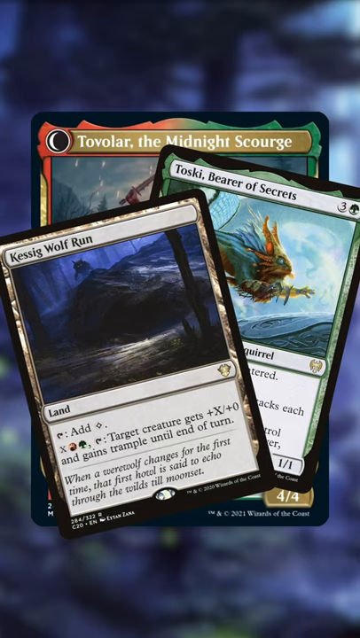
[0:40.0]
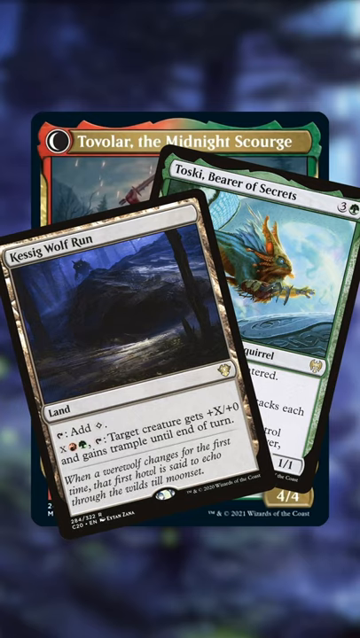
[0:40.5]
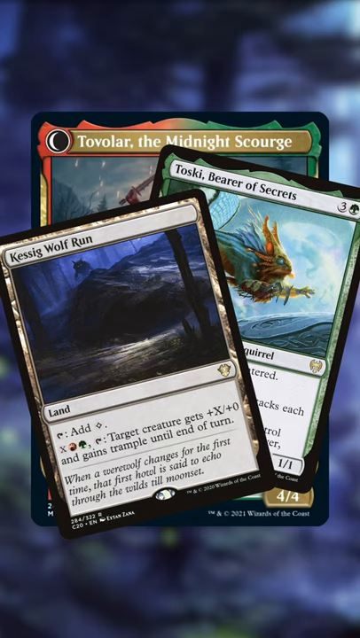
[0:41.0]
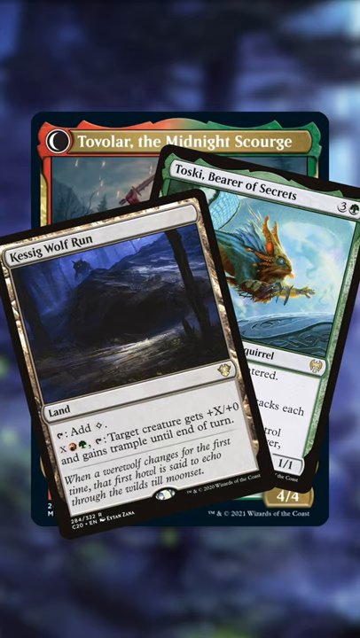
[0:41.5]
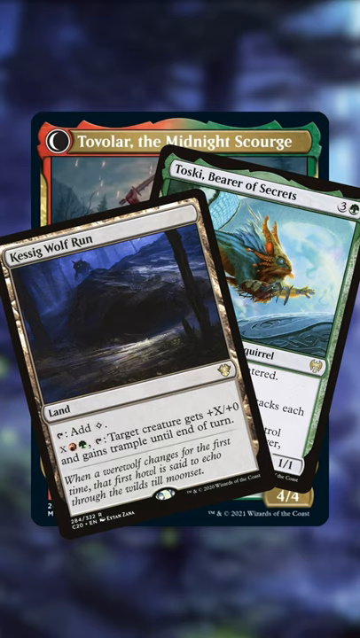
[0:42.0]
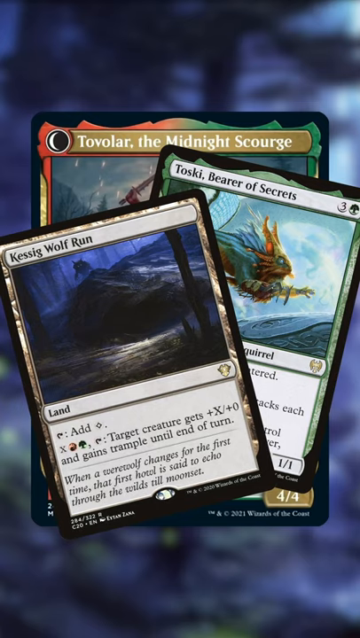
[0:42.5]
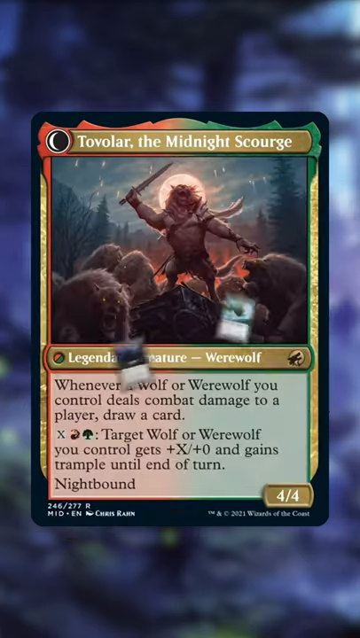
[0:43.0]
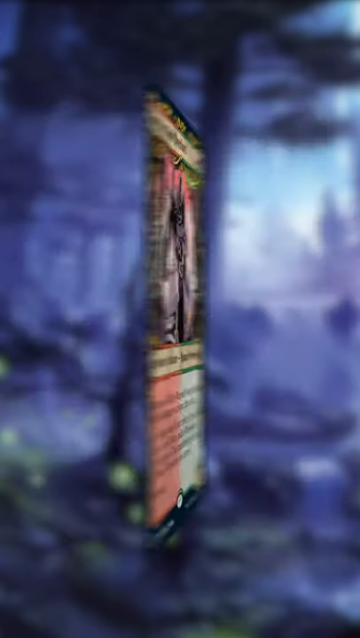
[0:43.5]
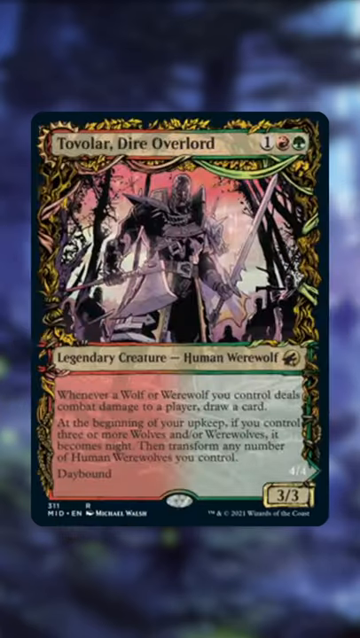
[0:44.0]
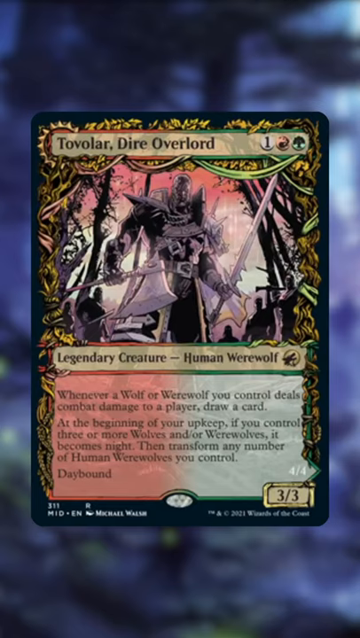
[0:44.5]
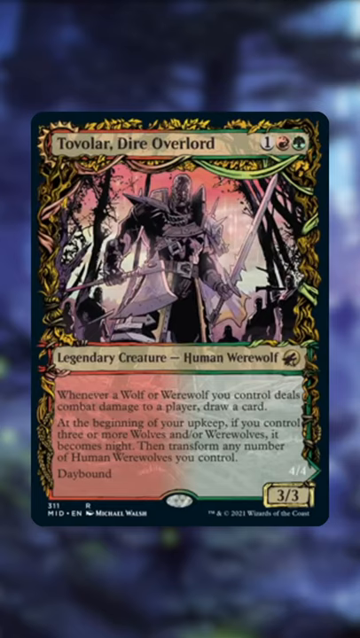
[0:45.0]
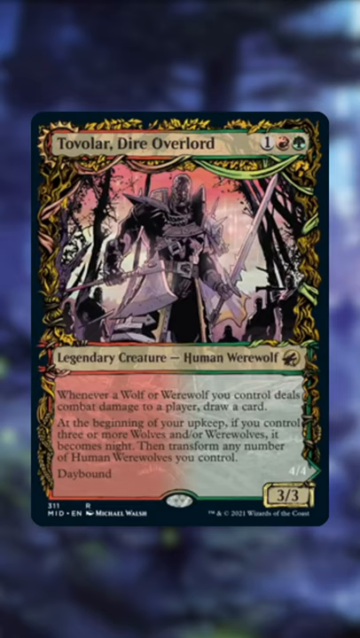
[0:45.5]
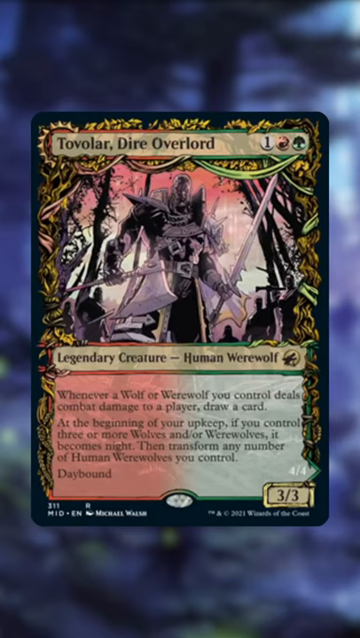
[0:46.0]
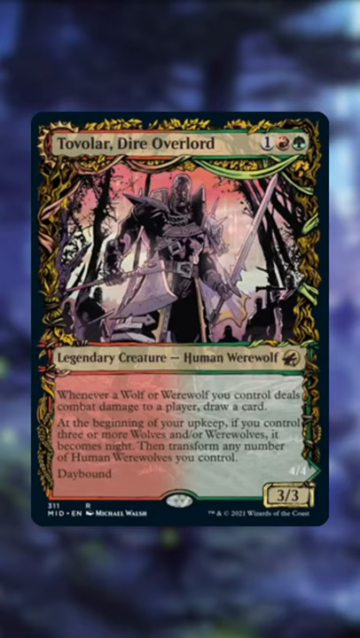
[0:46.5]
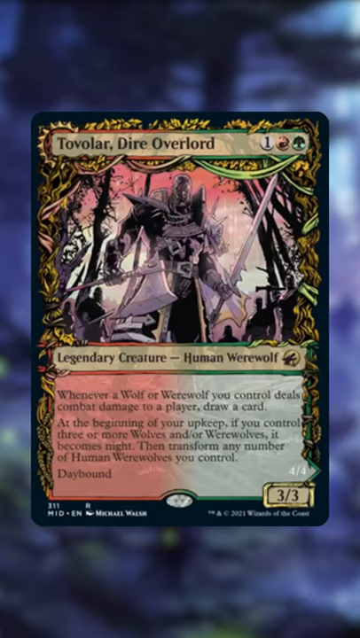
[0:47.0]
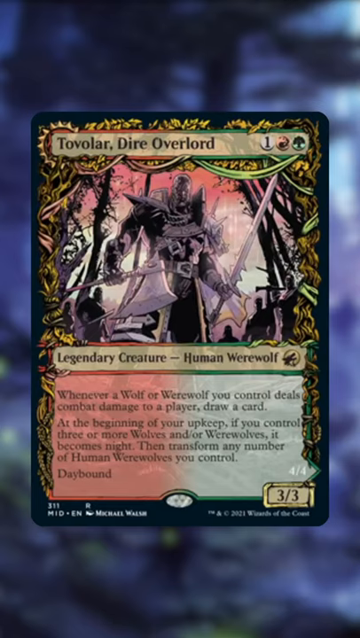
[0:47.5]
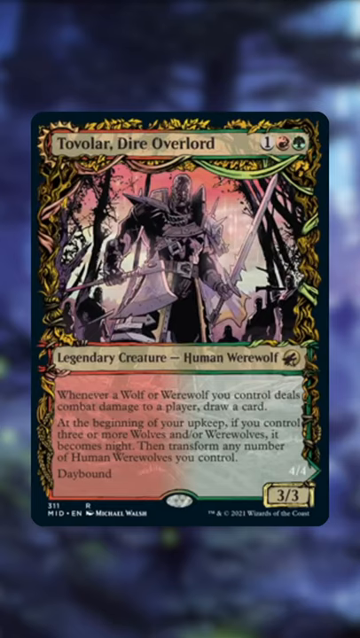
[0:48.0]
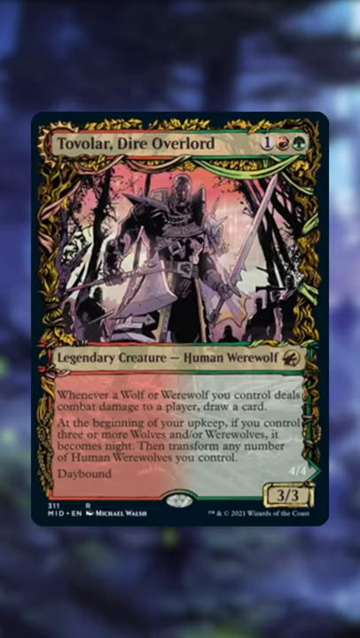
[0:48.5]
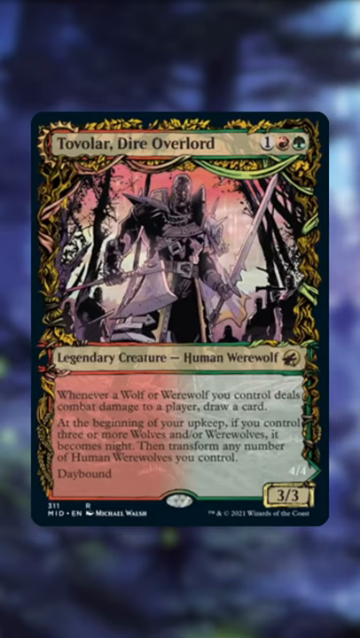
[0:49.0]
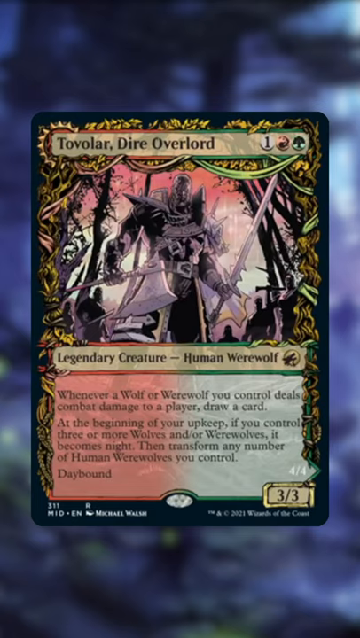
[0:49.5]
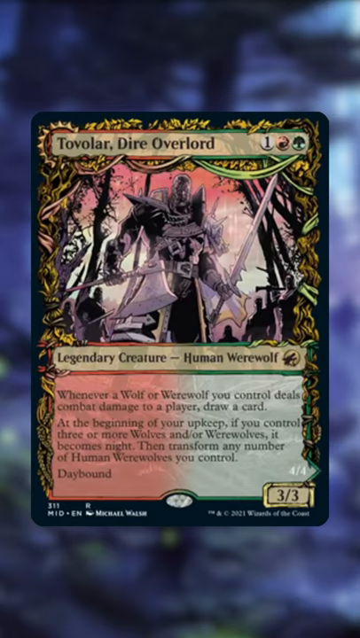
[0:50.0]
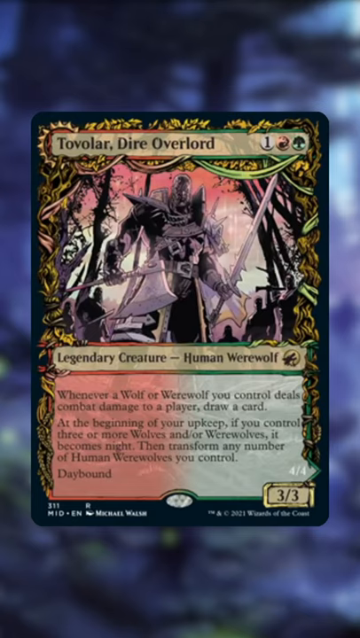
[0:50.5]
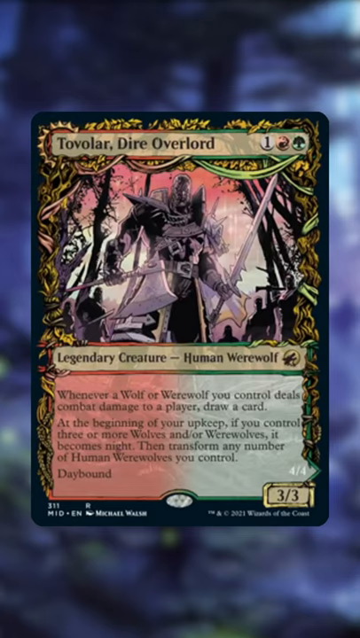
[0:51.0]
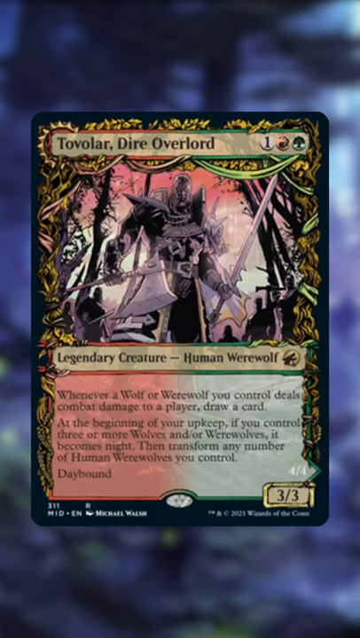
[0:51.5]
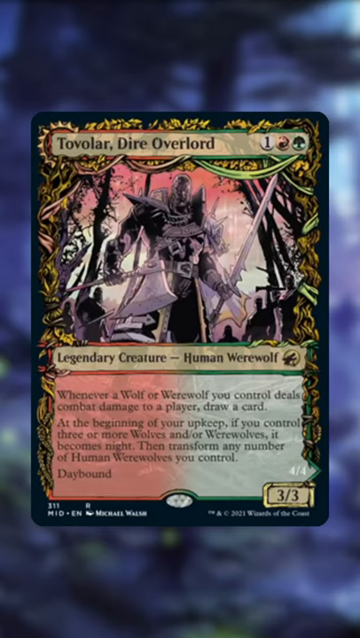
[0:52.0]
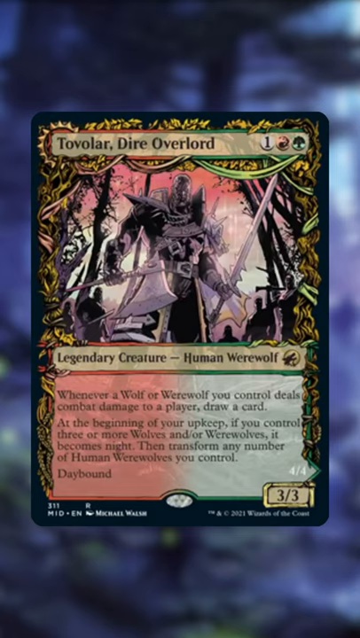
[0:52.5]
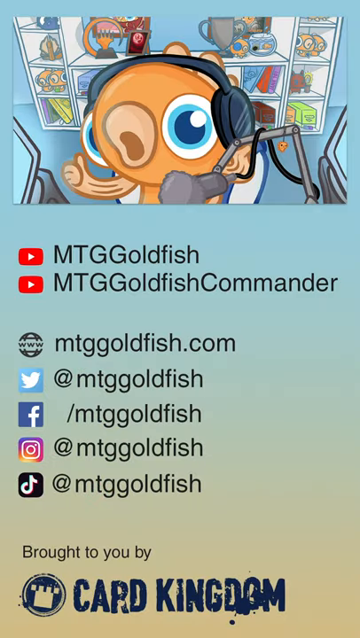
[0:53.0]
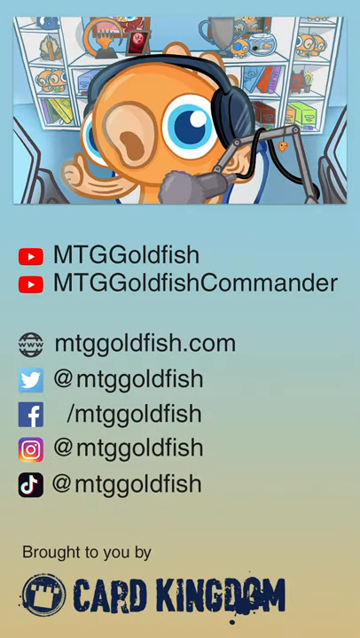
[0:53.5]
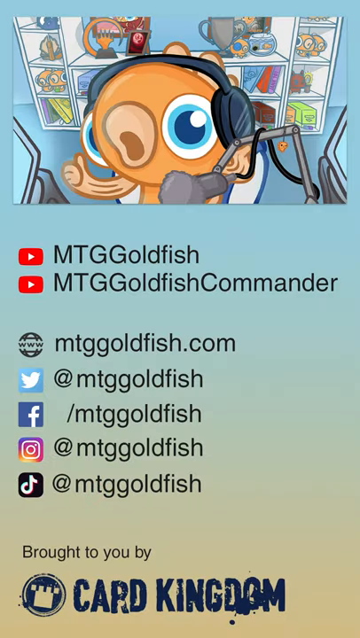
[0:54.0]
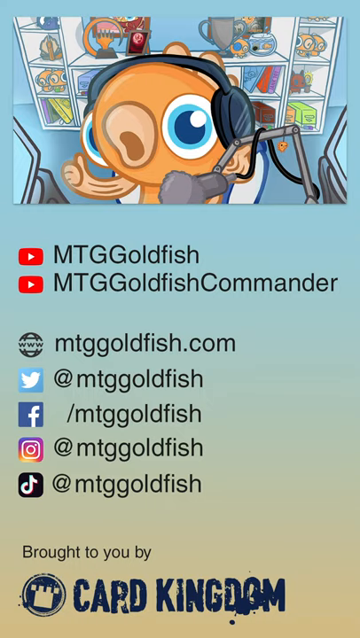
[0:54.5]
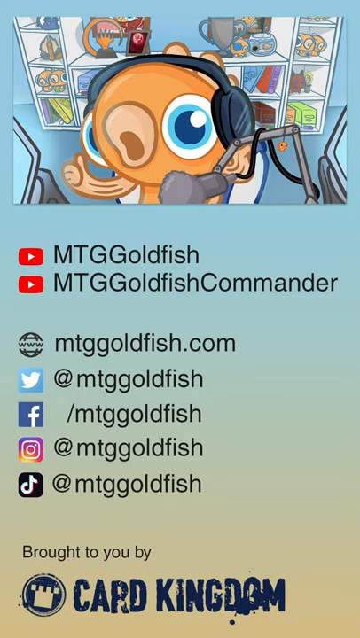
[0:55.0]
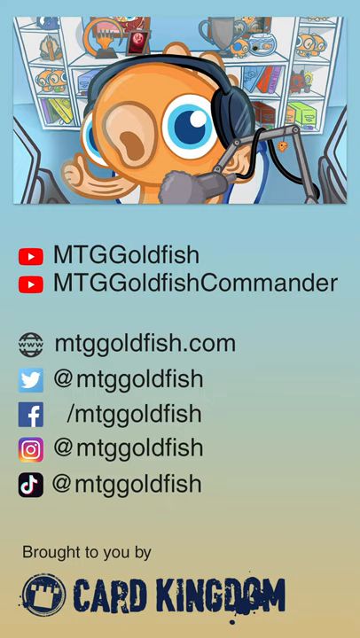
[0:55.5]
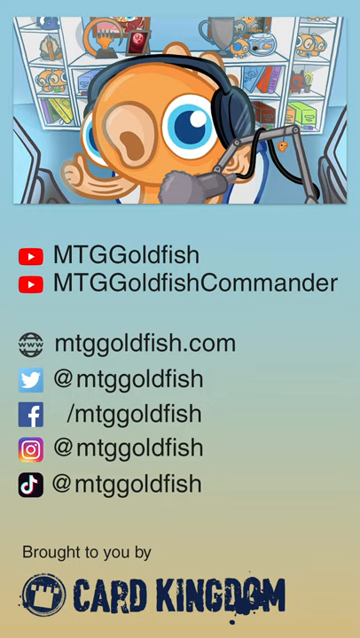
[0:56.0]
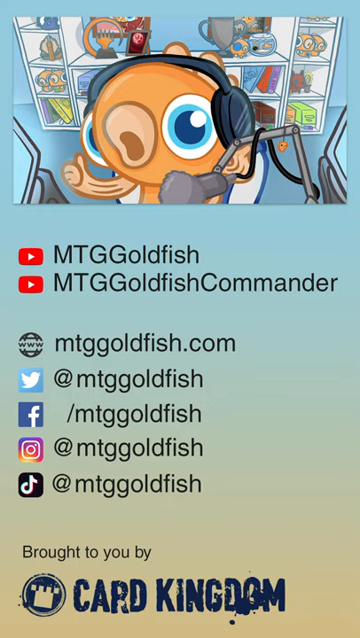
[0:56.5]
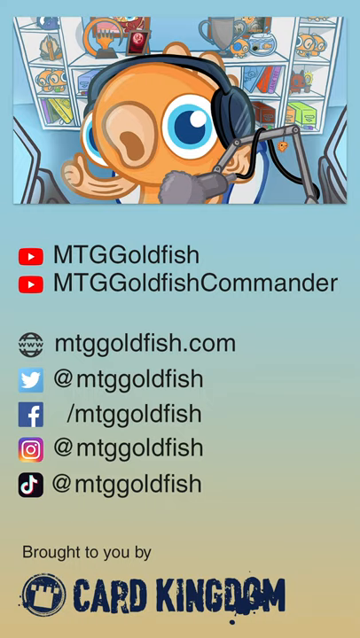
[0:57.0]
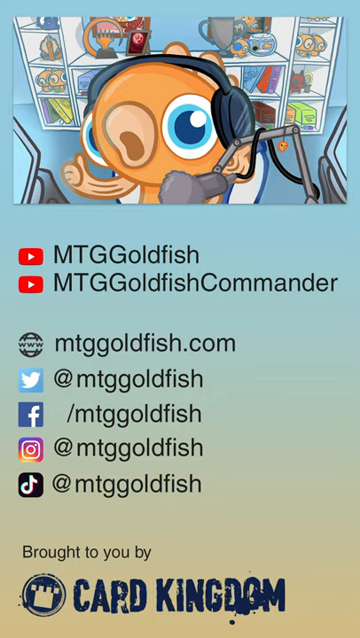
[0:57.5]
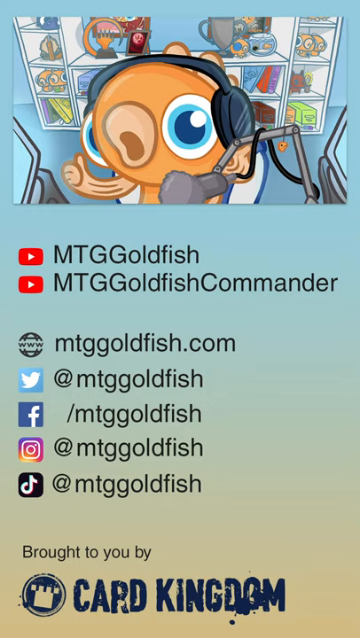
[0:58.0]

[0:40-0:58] The Kessig Wolf Run card is a black card with a silver-brownish background, with "Kessig Wolf Run" written on the top. Underneath is art of a dark forest with a large hill and the shadow of a werewolf in the background. Under the art it simply says "land," and below that "add," followed by the fire and earth mana symbols. It then reads "target creature gets plus X/plus zero and gains," and below that, in italicized letters, "when a werewolf changes for the first time, that first howl is said to echo through the wilds to." The camera stays on this image until the video switches to an ad for a YouTube channel called MTGGoldfish, with various links to their website, Twitter and Facebook pages.